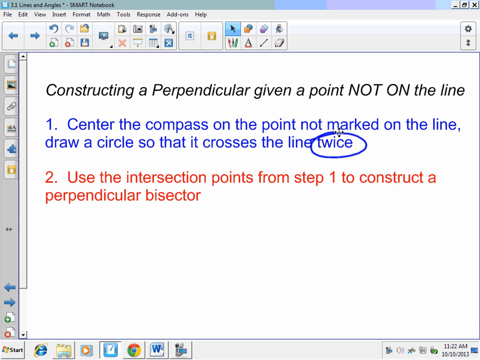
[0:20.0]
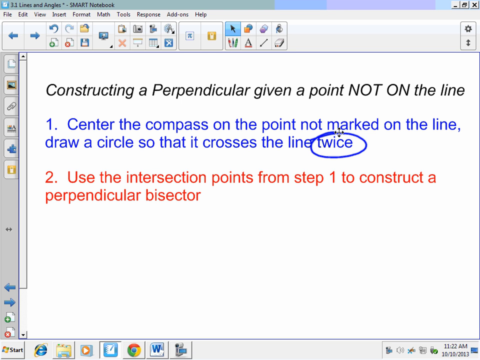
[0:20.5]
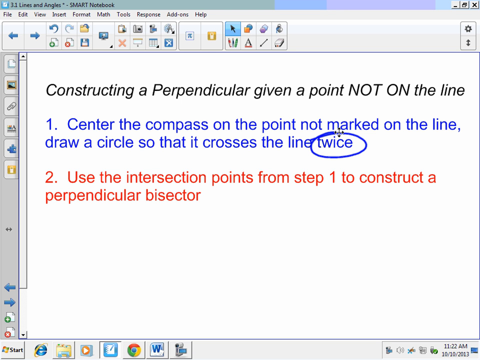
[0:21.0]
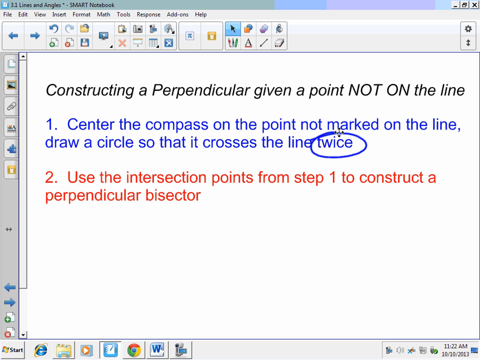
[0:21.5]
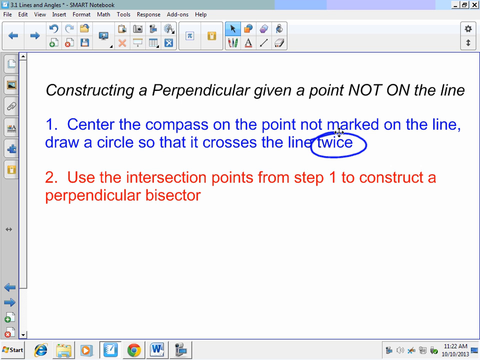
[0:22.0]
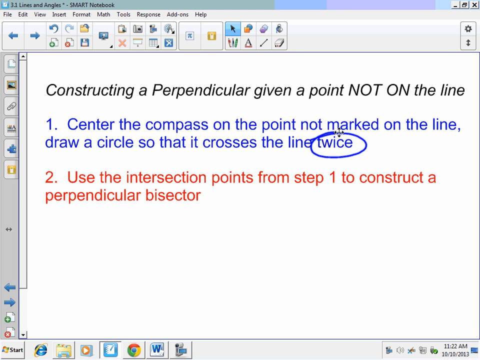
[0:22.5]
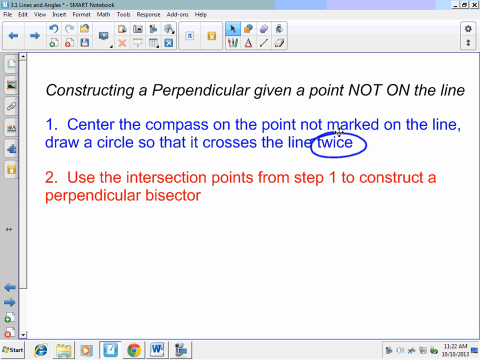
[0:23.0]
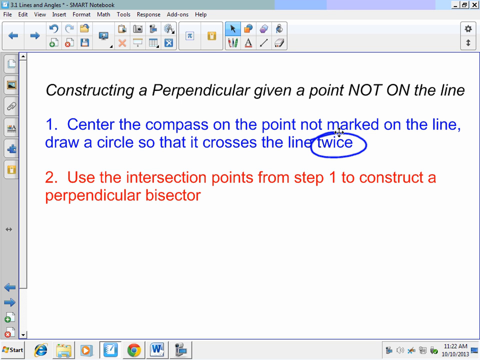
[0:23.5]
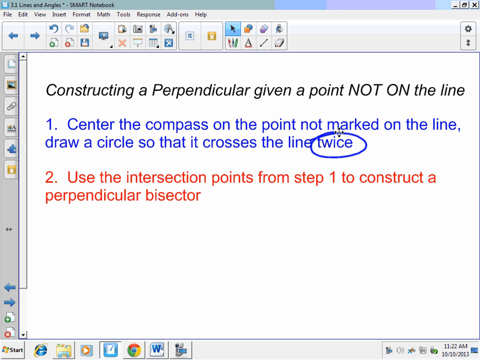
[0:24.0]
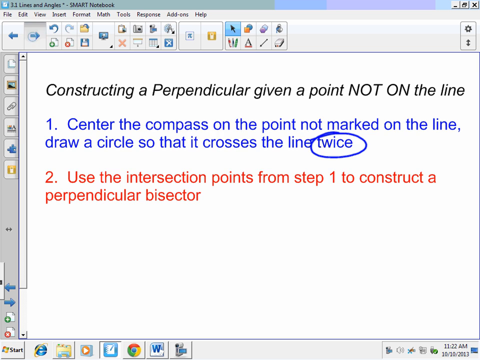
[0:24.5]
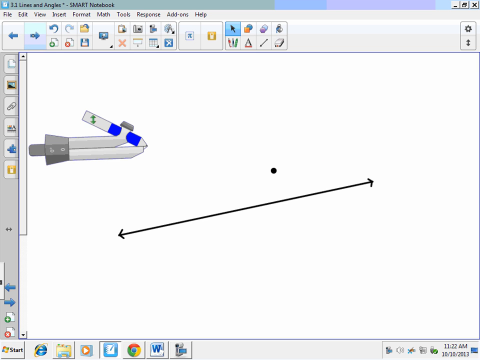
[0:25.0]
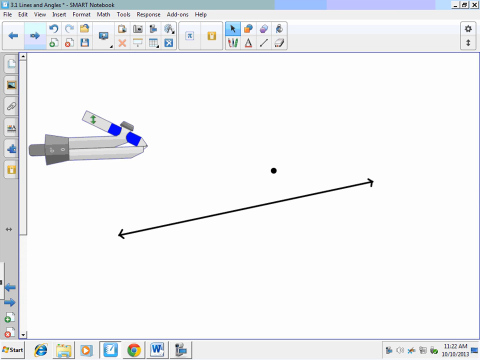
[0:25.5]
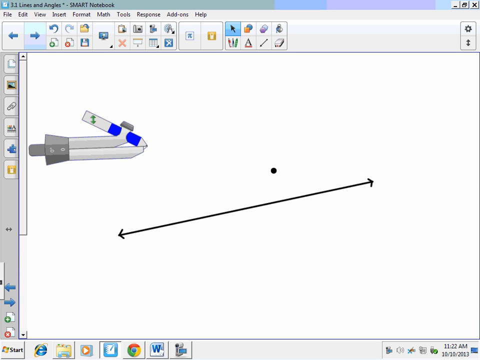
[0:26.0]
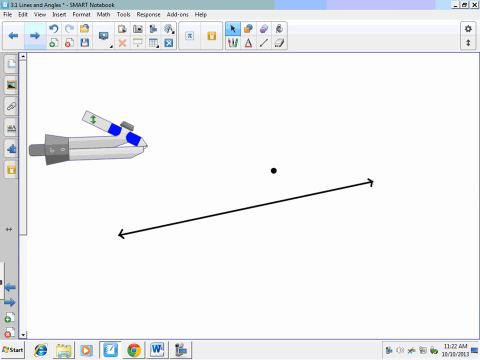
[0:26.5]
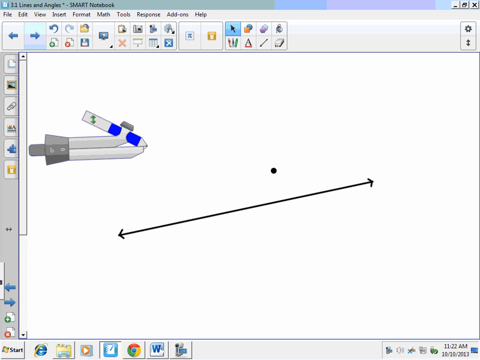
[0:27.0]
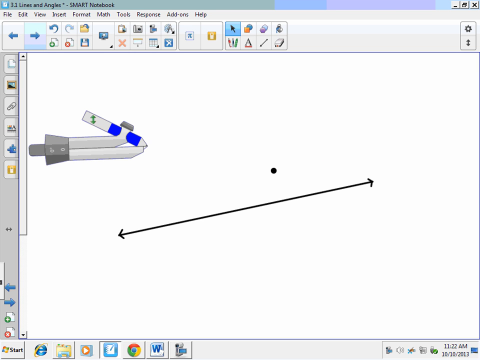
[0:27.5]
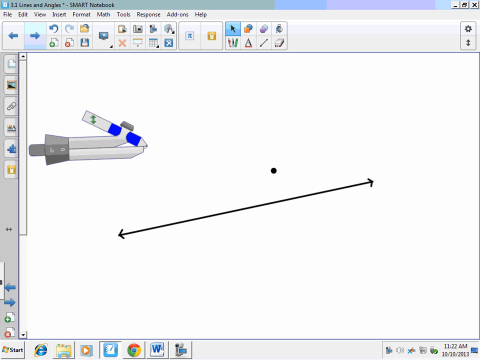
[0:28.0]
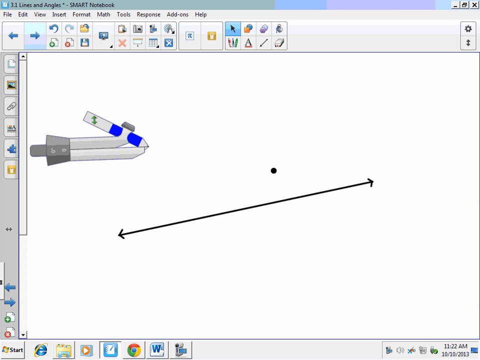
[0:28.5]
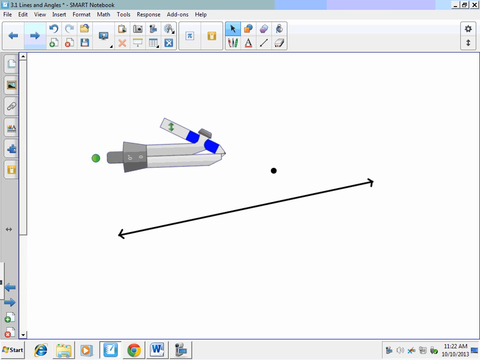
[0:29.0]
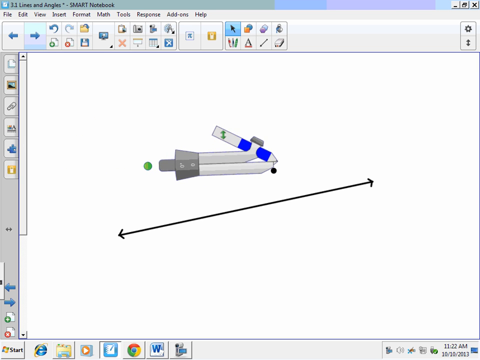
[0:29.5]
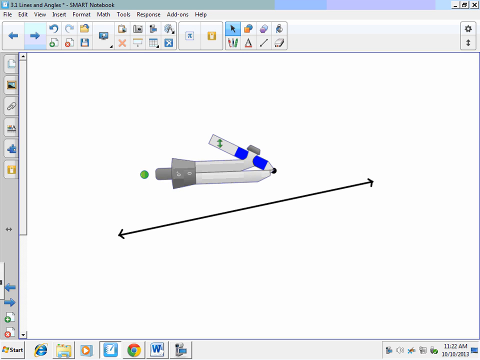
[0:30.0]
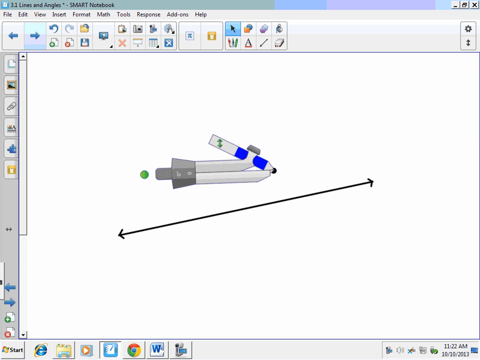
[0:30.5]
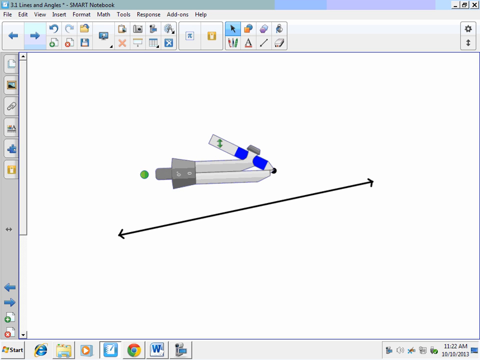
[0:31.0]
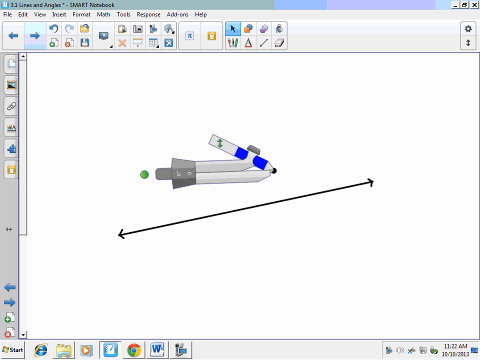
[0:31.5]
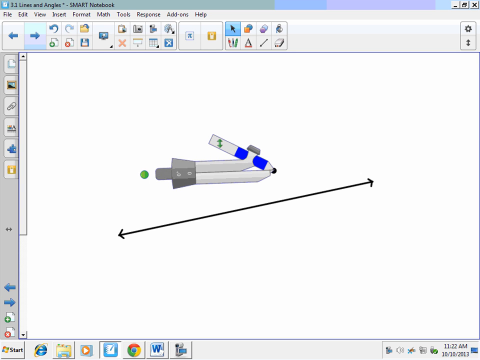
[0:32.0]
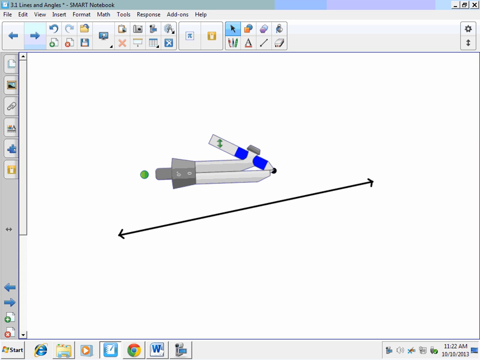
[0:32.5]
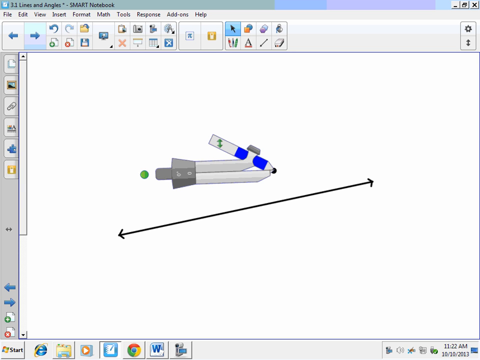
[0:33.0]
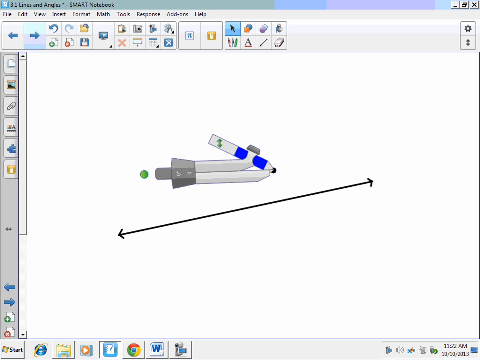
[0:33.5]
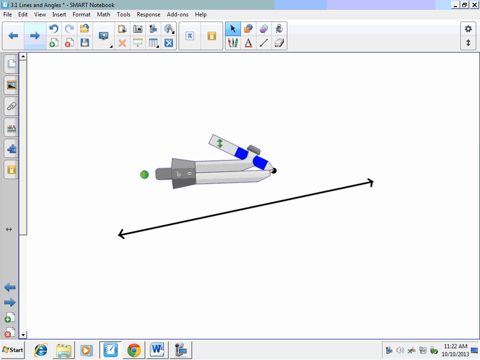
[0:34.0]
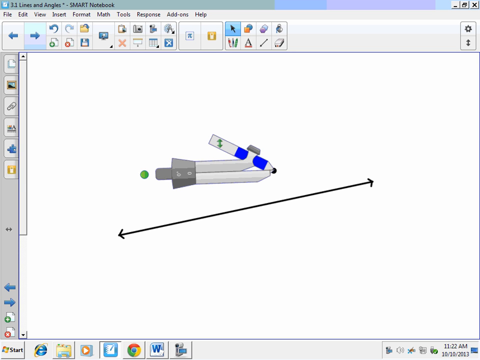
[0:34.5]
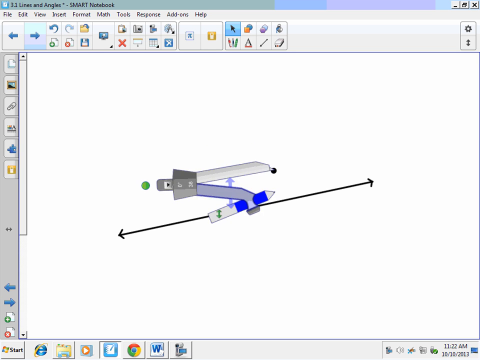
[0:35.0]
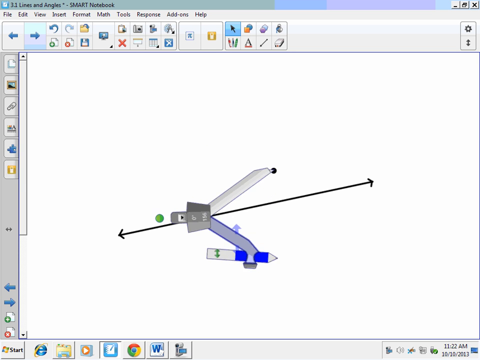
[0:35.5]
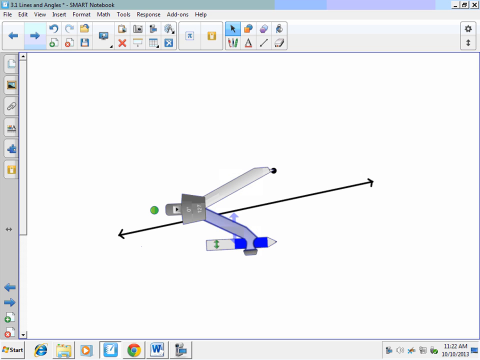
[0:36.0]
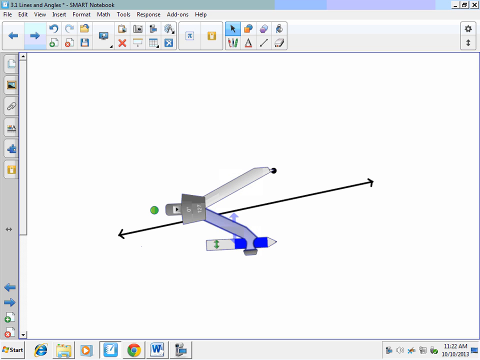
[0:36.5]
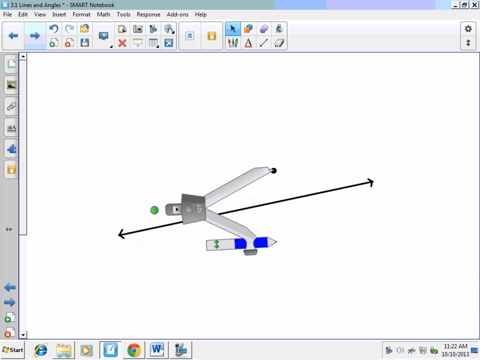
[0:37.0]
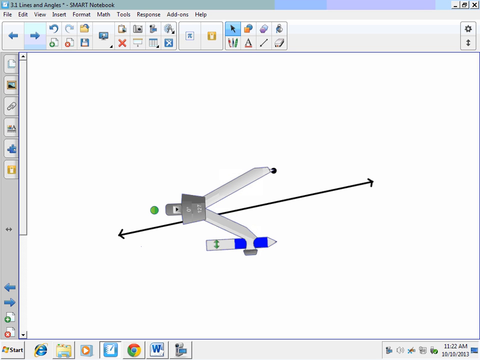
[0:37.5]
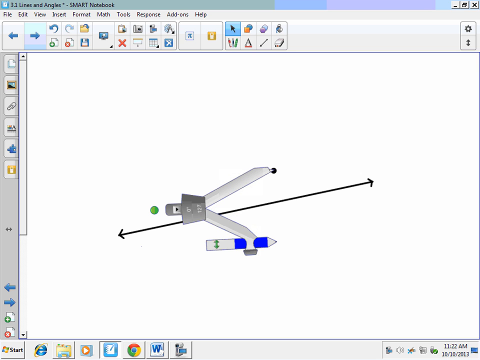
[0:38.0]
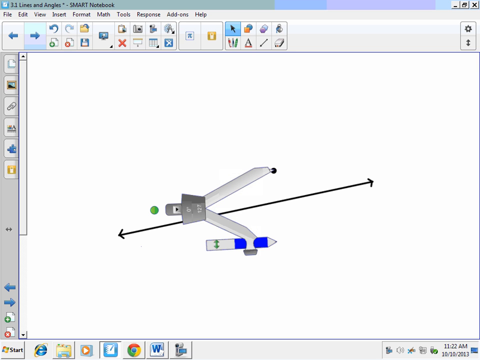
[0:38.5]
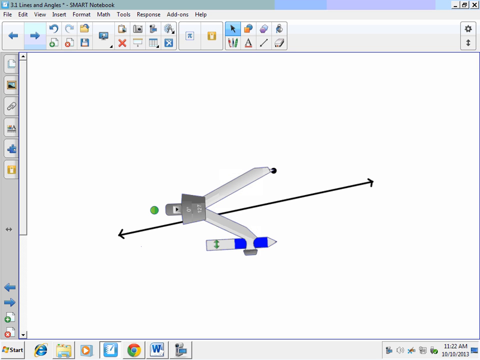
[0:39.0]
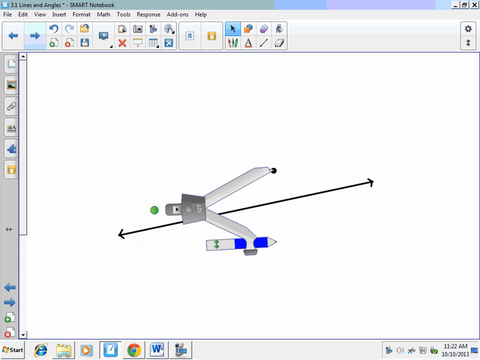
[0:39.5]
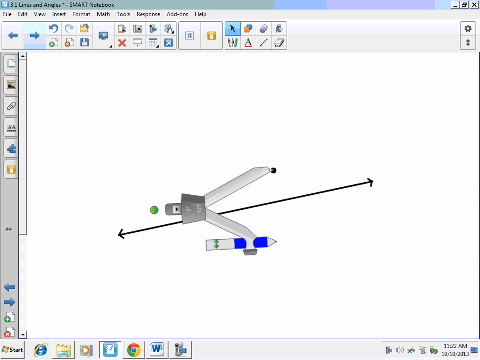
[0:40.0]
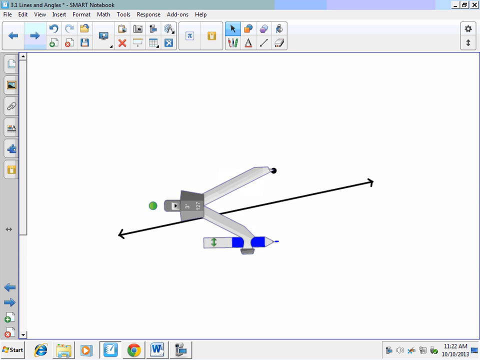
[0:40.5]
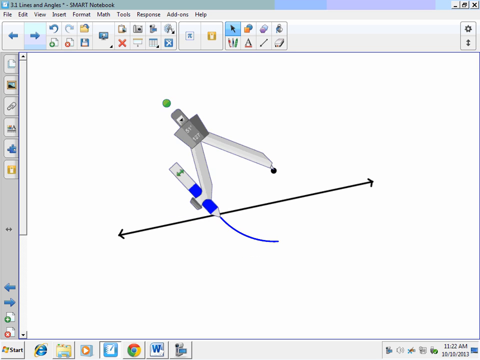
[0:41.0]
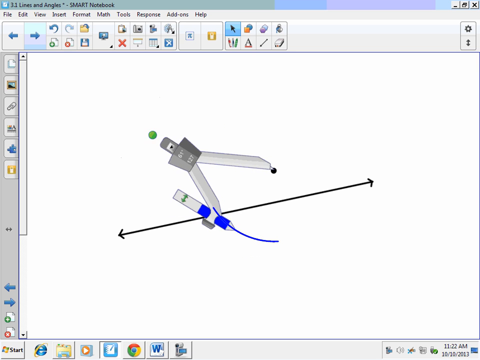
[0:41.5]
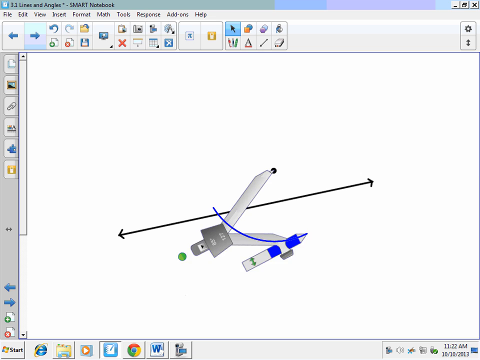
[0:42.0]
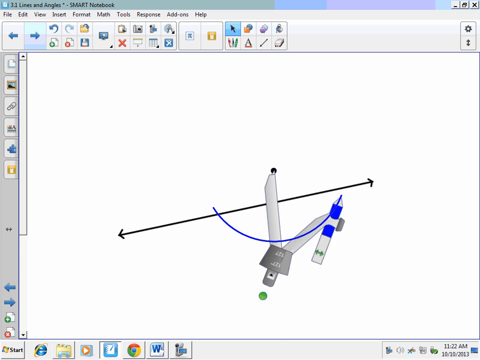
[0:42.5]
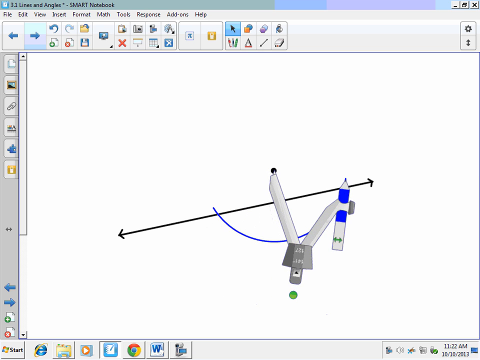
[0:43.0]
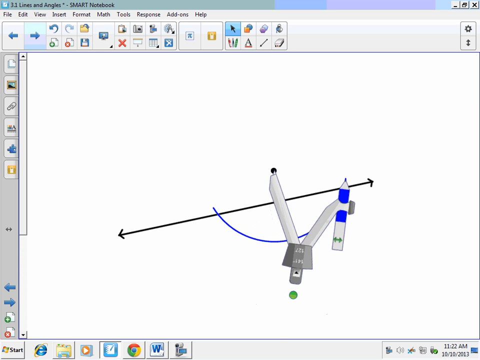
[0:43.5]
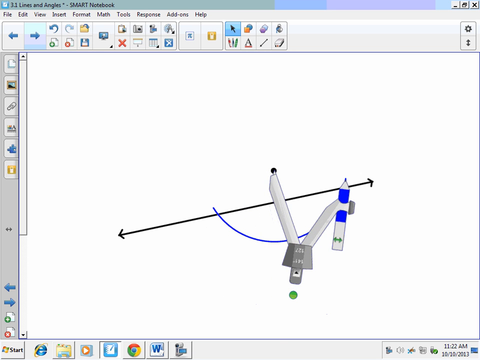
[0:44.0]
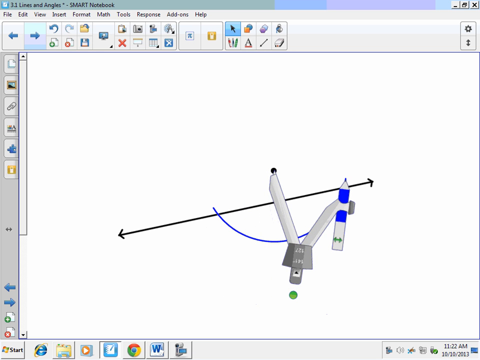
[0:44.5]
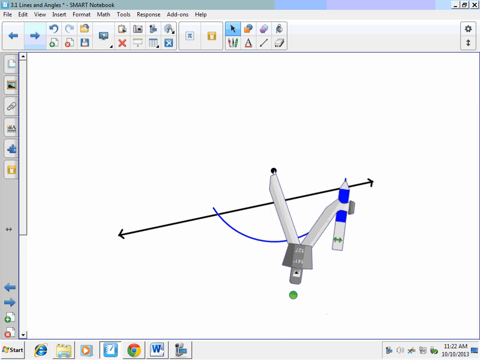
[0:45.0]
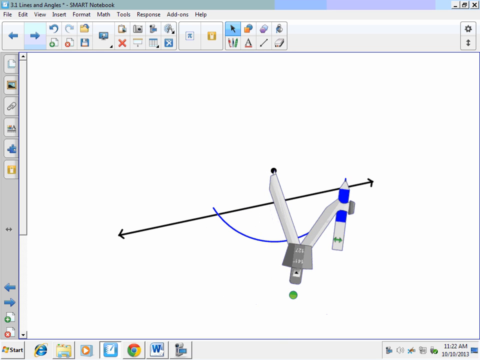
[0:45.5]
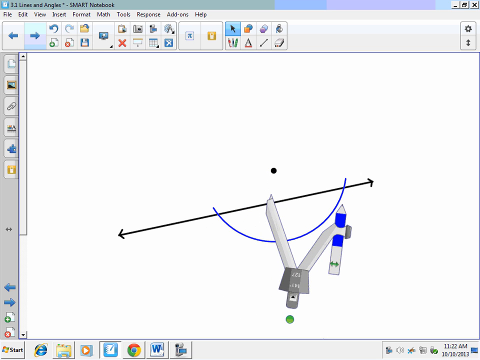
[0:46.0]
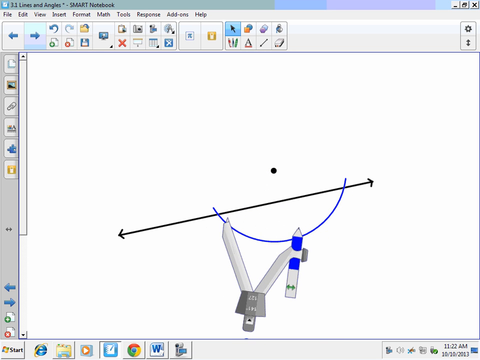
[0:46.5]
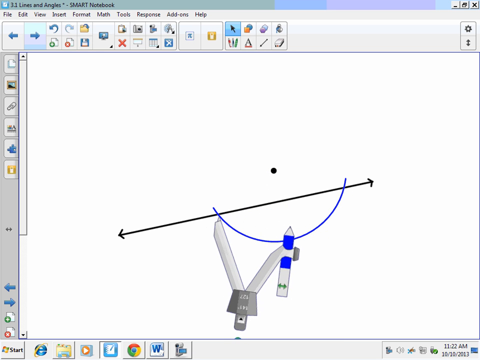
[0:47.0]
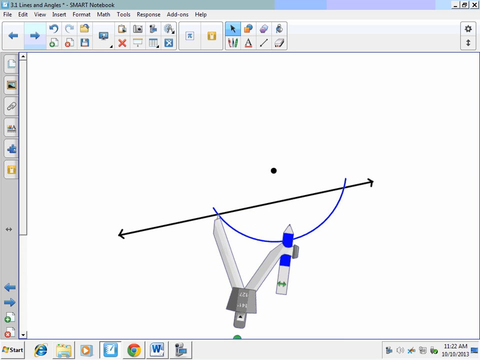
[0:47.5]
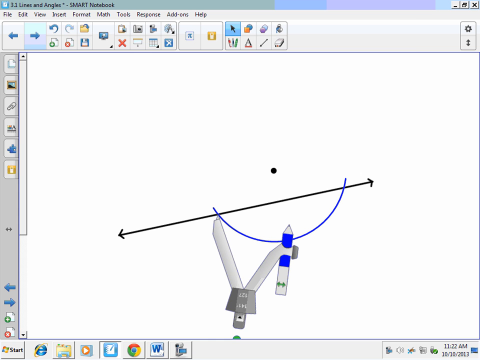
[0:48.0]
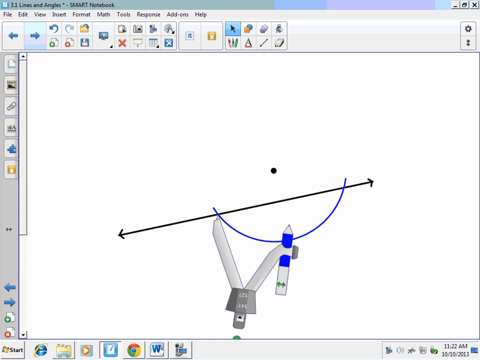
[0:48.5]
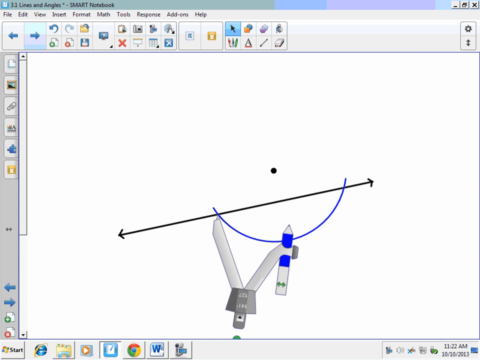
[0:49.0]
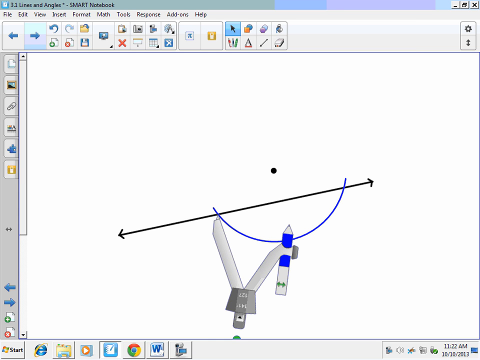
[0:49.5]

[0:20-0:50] Screen-shared content shows the notebook open with instructions on how to construct a perpendicular given a point not on the line, with the words "not on" emphasized. There are two points on how to do it, and in the first point the words "crosses the line twice" are circled. An arrow pointing rightward is clicked, and the view switches to a different page showing a circle and something like a diagonal line with arrowheads. There is an icon holding a pencil, and the icon, a protractor, moves to the center of the page and stops at the circle, where two arrows pointing upward and downward appear. The protractor extends: its sharp end stays on the circle while the side holding the pencil moves downward, leaving a little dot. The pencil then goes in an anticlockwise direction and then in a clockwise direction, intersecting the line in both directions. The protractor then moves from the circle to the point on the line on the anticlockwise, apparently left, side.